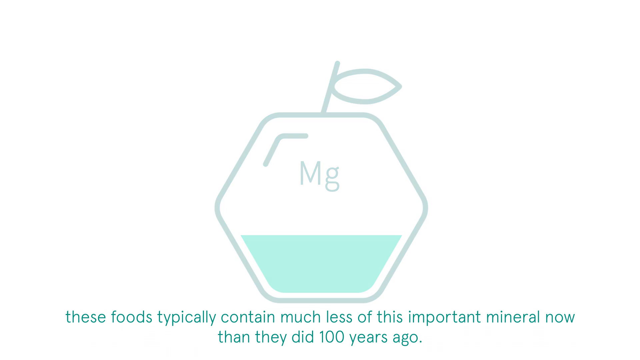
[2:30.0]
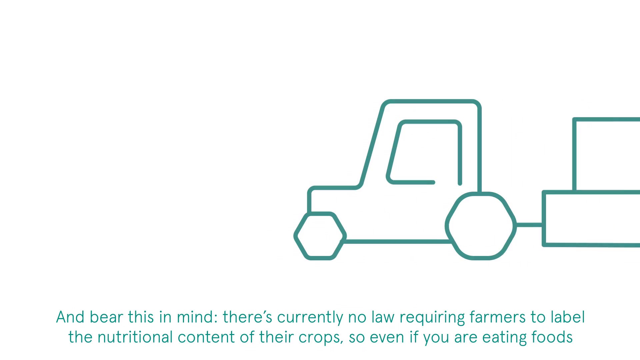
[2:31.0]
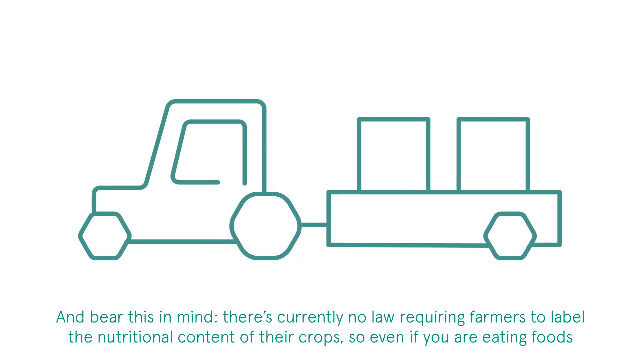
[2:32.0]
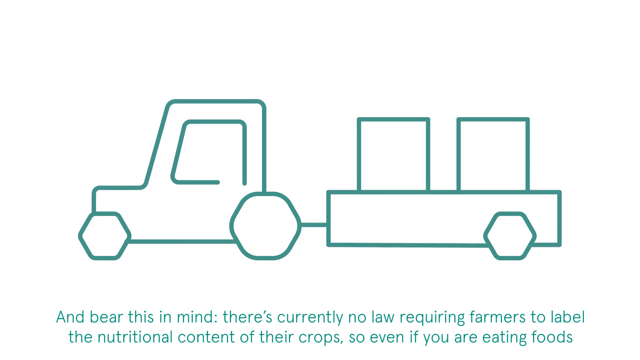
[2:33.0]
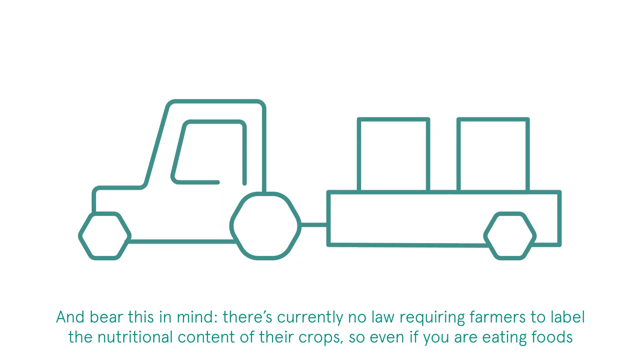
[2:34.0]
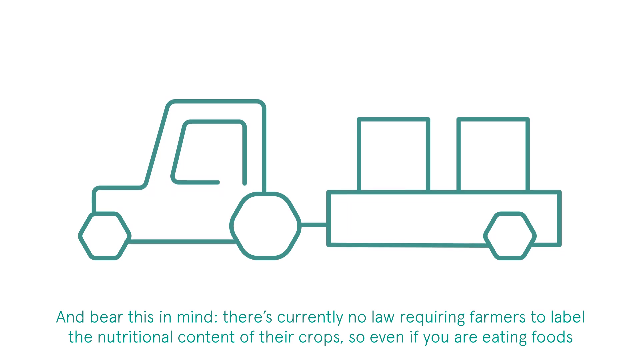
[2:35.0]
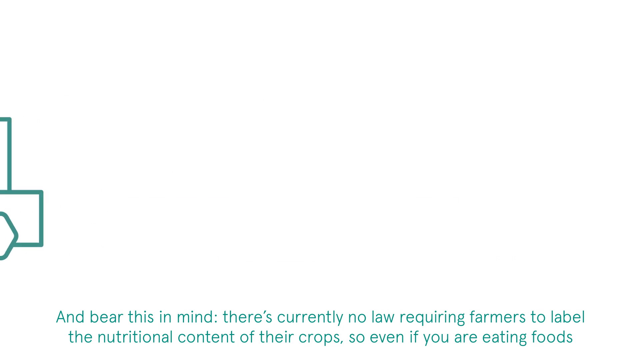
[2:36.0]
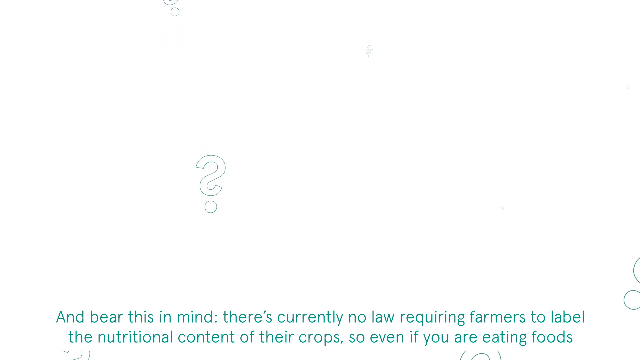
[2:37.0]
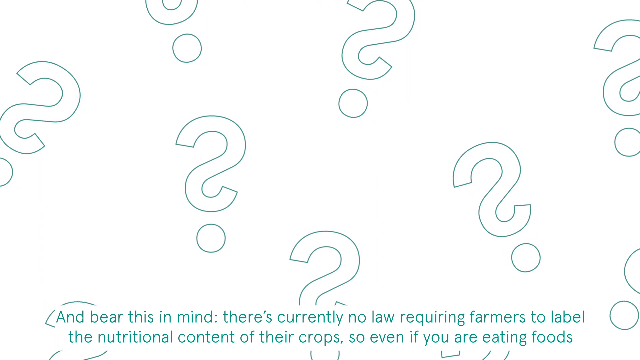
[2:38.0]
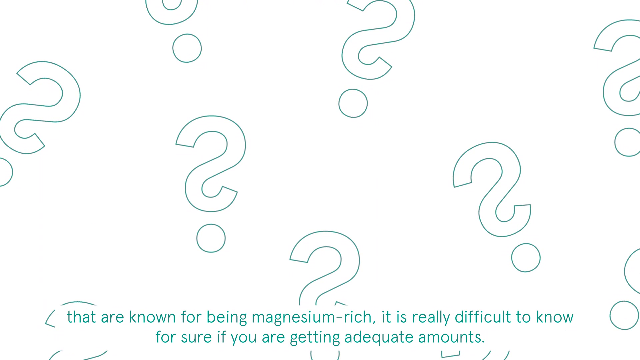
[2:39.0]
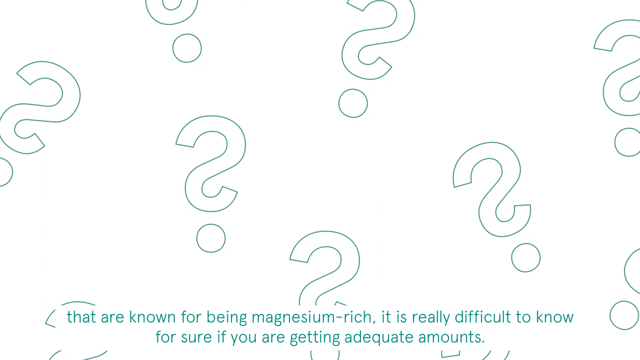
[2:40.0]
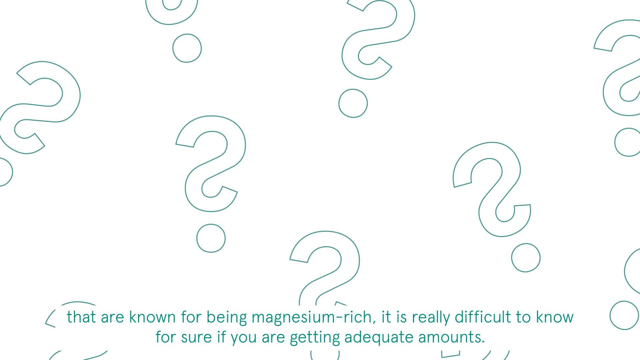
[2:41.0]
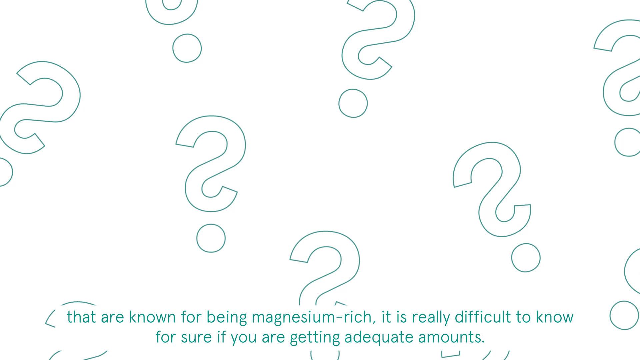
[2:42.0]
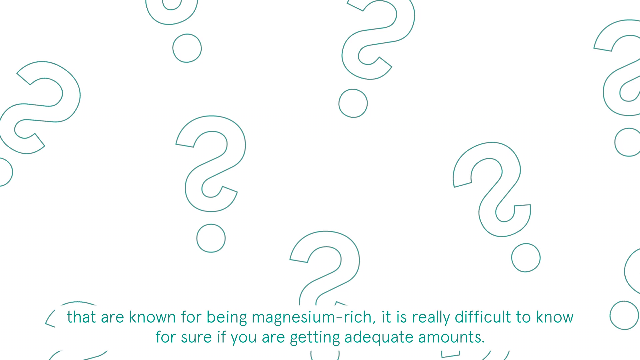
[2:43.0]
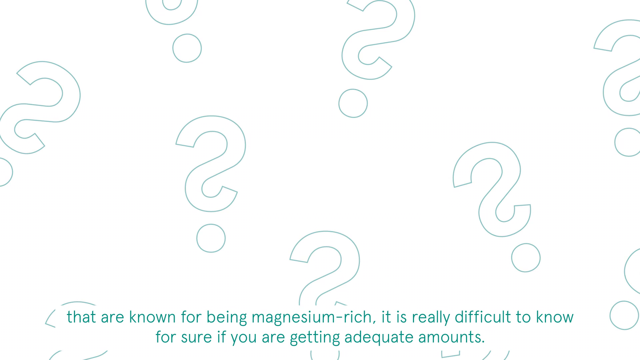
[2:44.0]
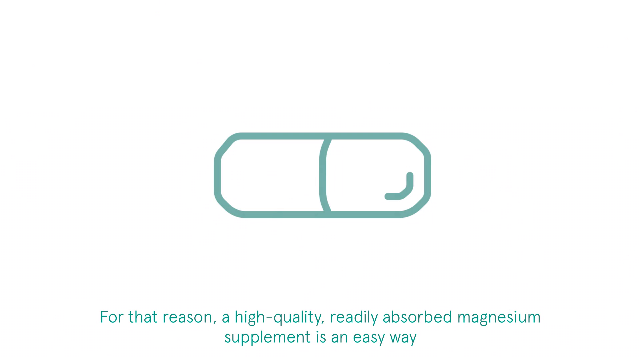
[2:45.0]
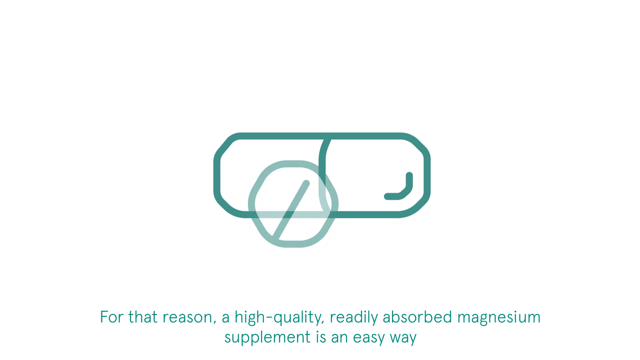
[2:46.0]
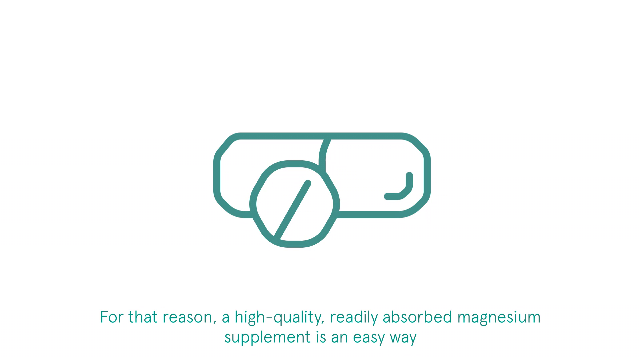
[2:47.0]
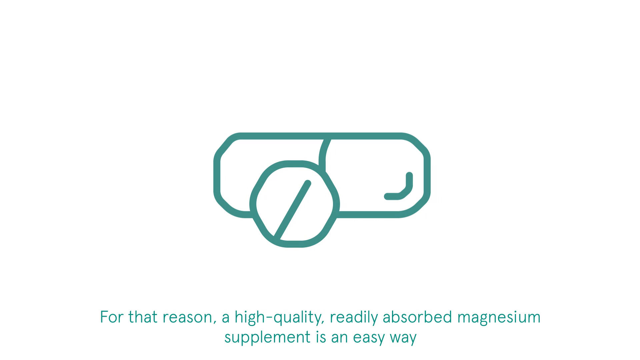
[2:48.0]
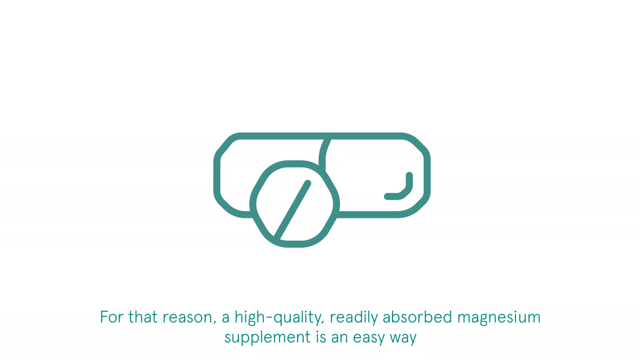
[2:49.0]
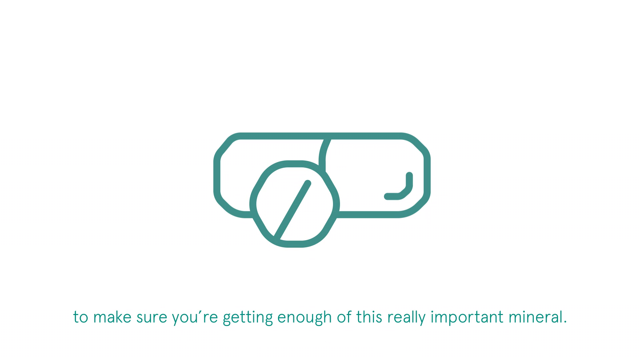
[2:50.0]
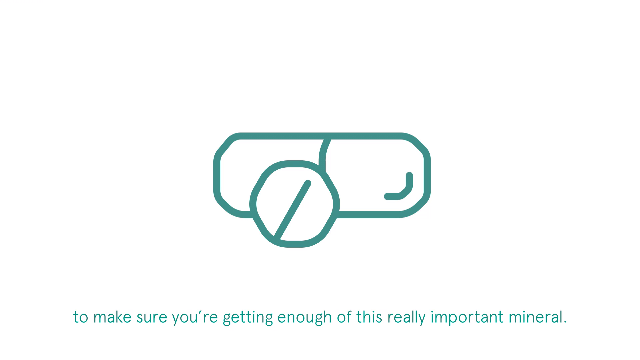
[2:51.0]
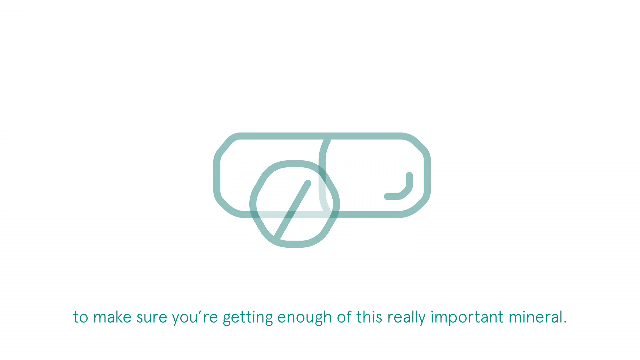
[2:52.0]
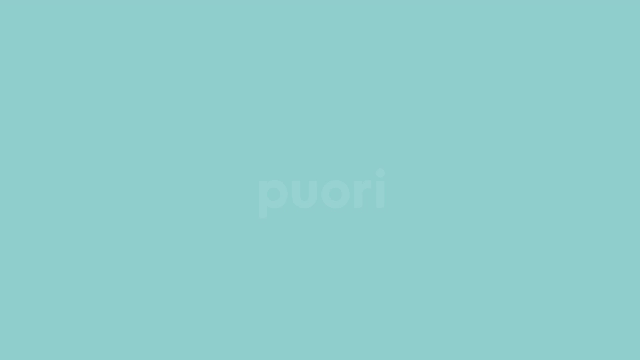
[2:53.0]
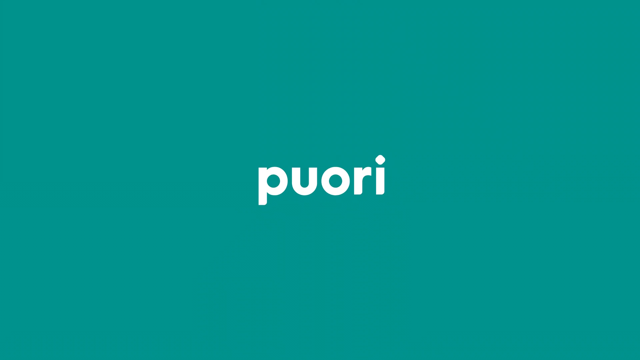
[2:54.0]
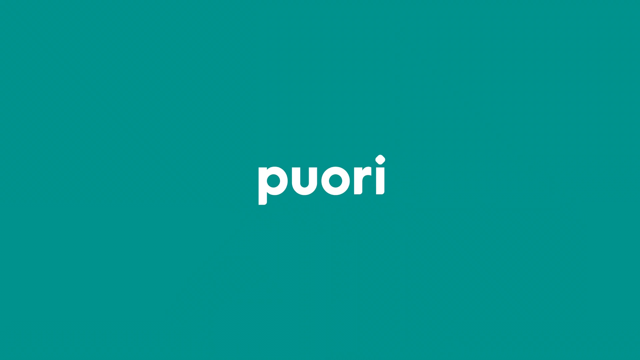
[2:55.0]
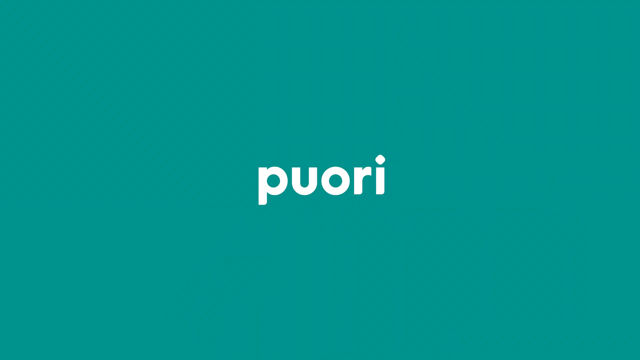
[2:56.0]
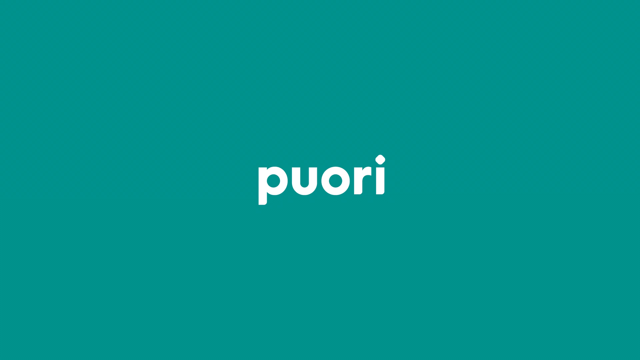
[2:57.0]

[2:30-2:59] Each part of the video consists of slides with seemingly hand-drawn pictures outlined in blue-teal. Everything looks very diagonal, almost Minecraft-like, with shapes built from hexagons or octagons. An apple is shown as a hexagon, with one leaf sticking out to the right and a chevron in the top left corner suggesting light. The text "Mg" appears, with a capital M and a lowercase g. At the bottom it says "these foods typically contain much less of the important mineral." A new slide shows a truck with a trailer carrying two big boxes, with the text "bear this in mind, there's currently no law requiring farmers to label the nutritional content of your crops. So even if you are eating foods". The next slide has many thin outlines of question marks and the text "it has been known for being magnesium rich." The final slide shows pill outlines: a capsule and a pill.